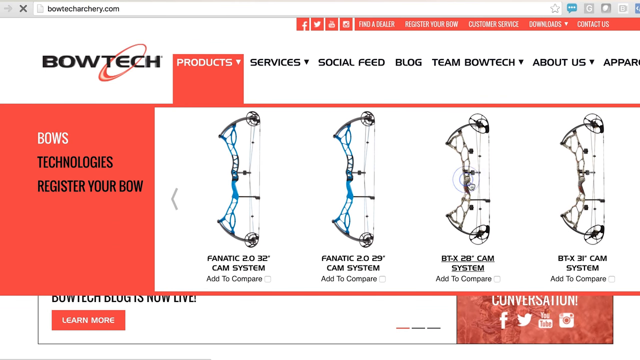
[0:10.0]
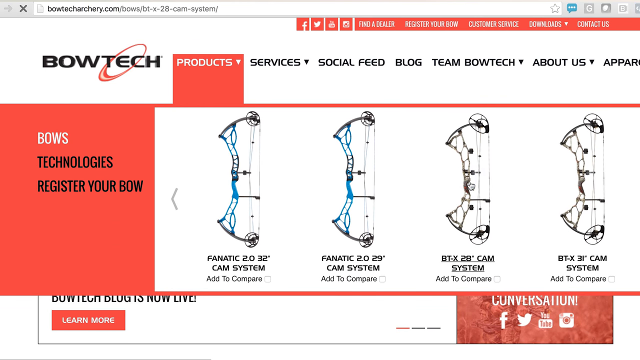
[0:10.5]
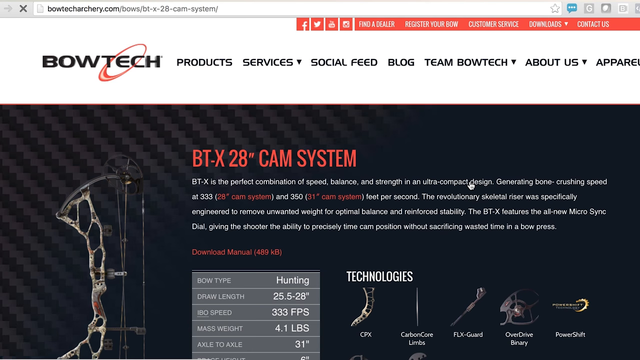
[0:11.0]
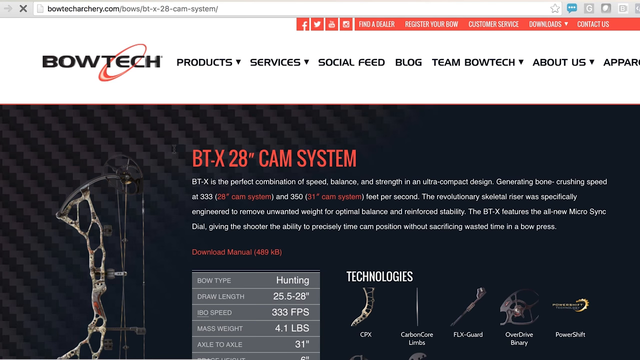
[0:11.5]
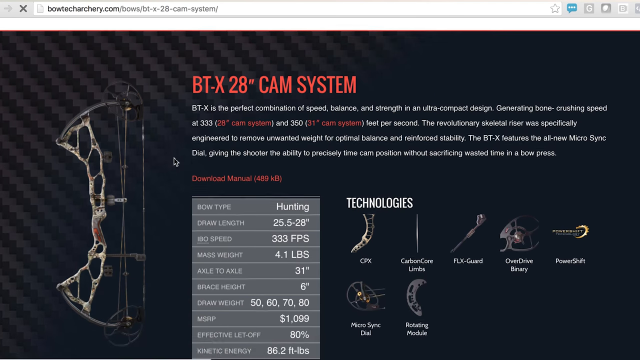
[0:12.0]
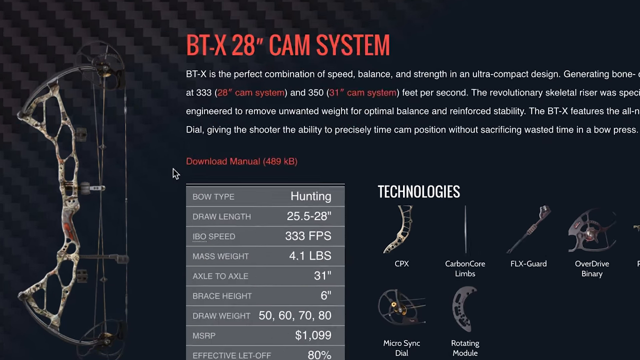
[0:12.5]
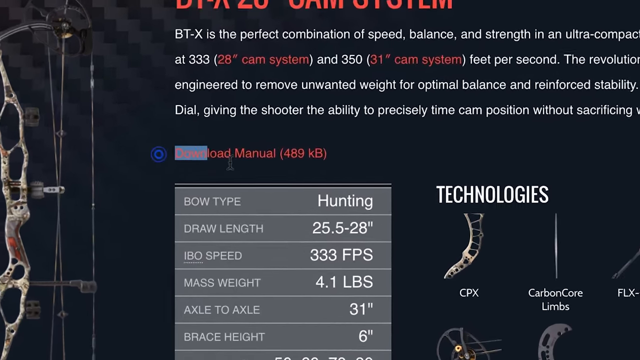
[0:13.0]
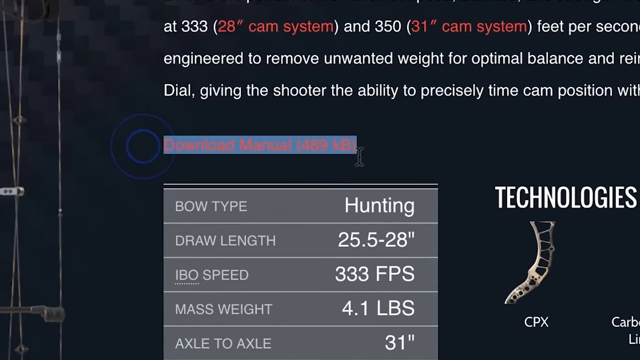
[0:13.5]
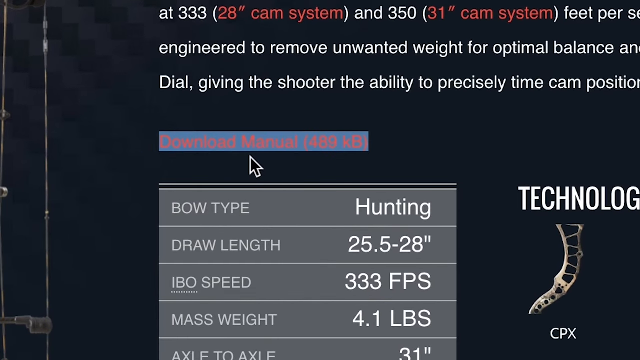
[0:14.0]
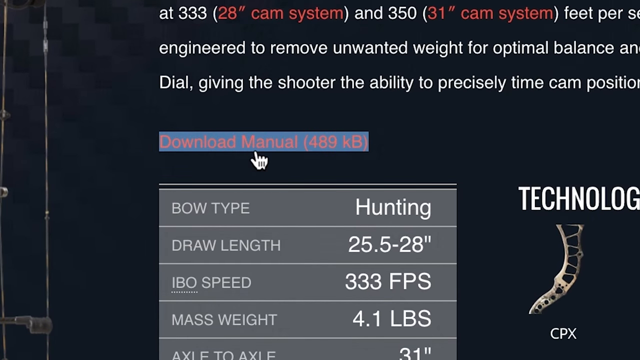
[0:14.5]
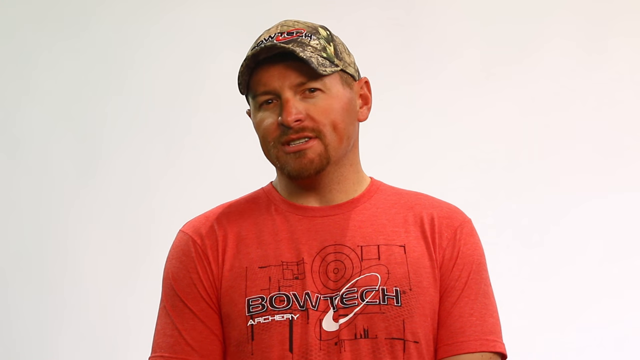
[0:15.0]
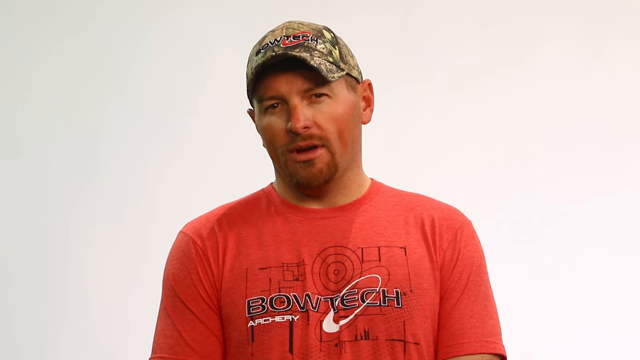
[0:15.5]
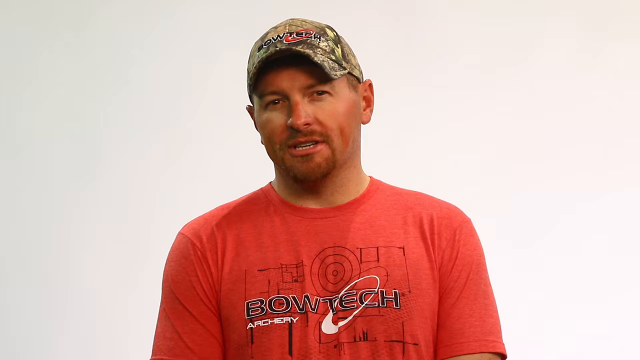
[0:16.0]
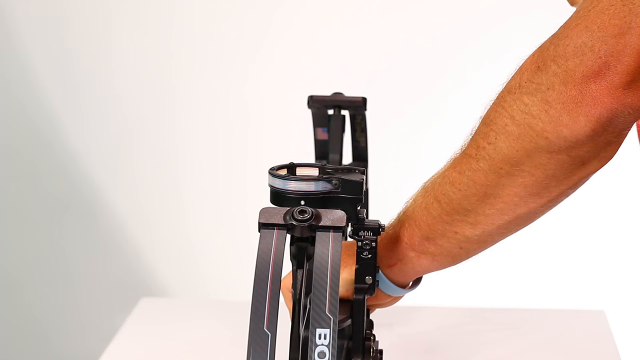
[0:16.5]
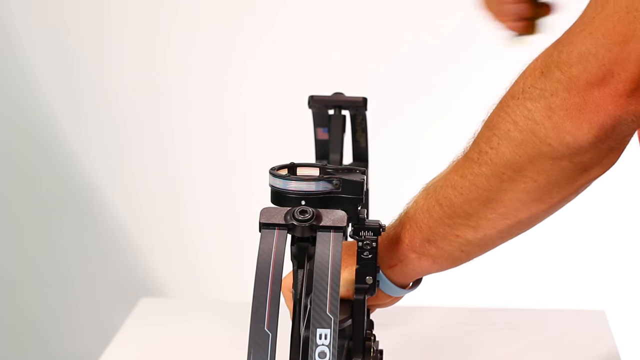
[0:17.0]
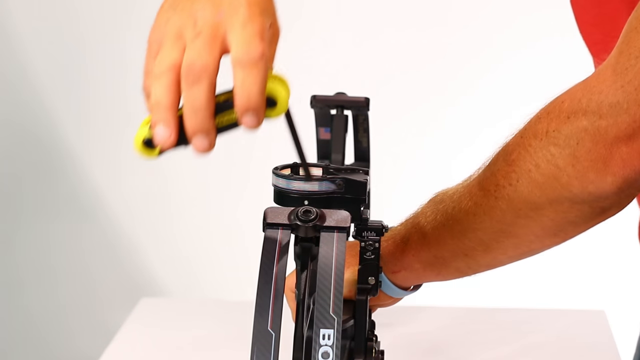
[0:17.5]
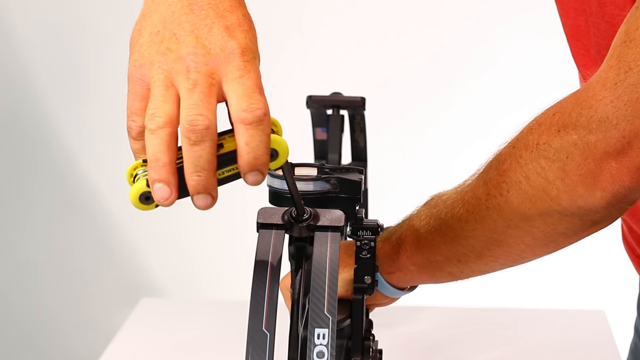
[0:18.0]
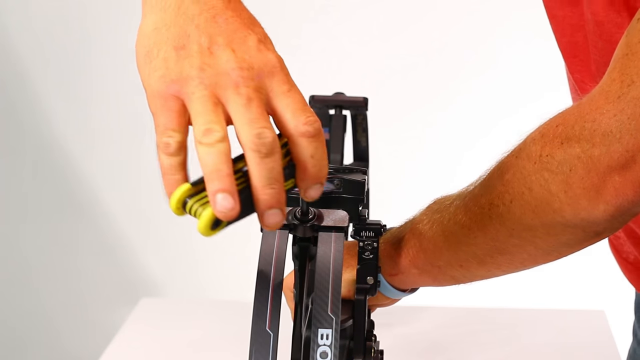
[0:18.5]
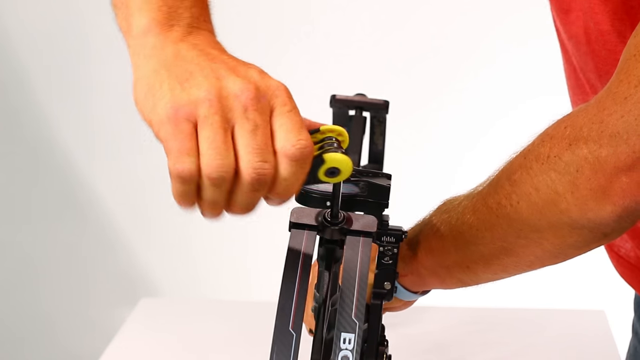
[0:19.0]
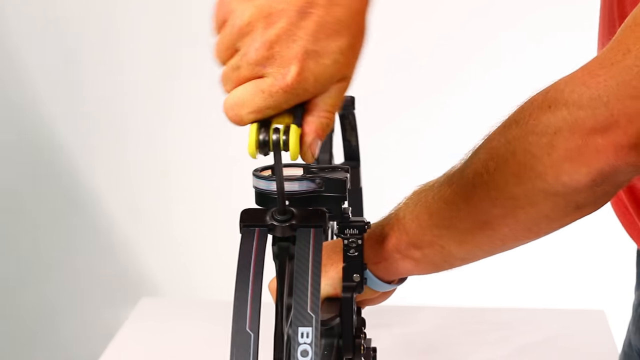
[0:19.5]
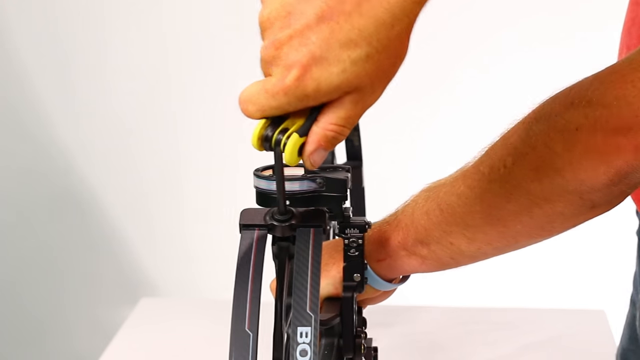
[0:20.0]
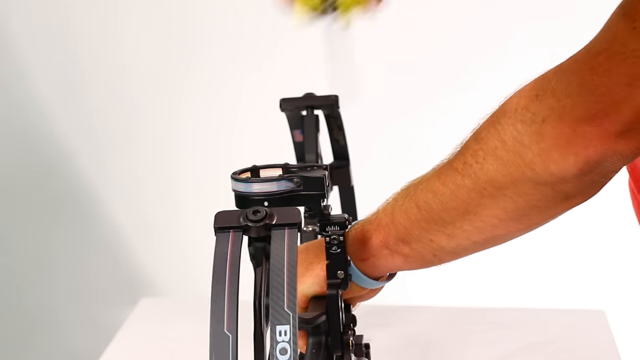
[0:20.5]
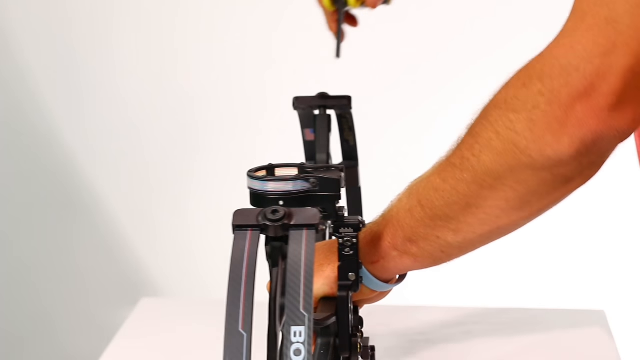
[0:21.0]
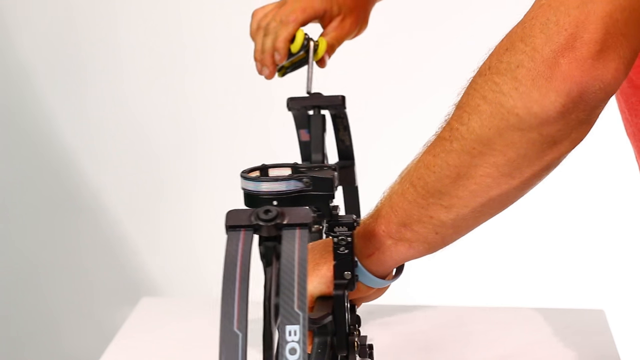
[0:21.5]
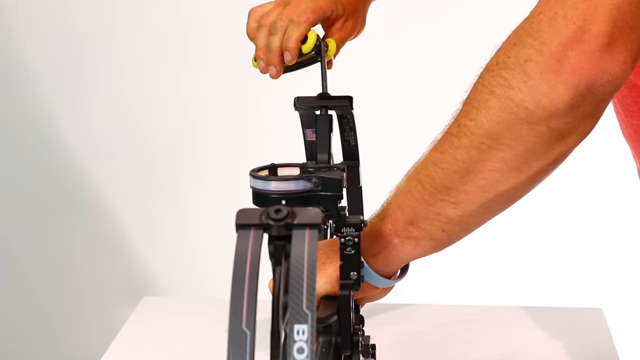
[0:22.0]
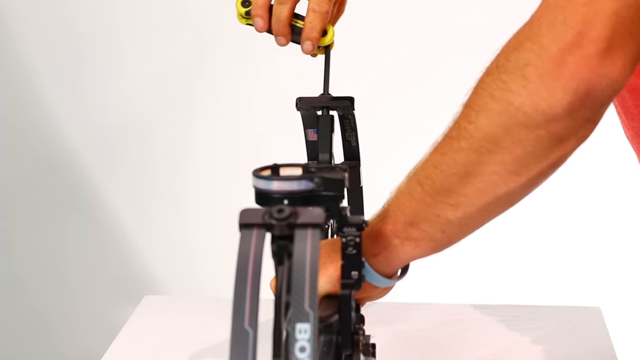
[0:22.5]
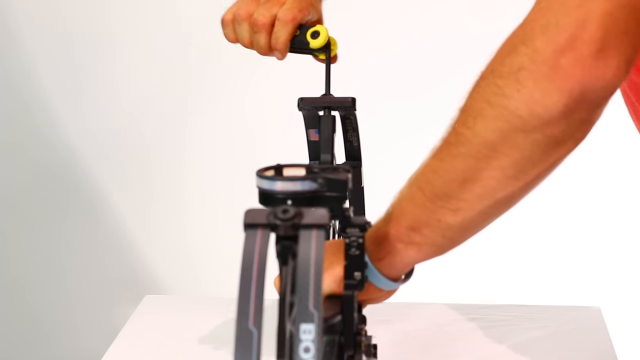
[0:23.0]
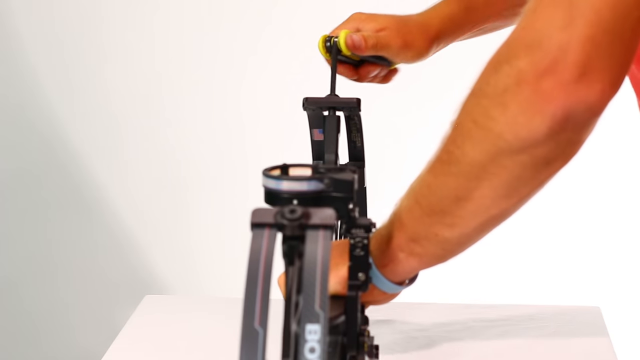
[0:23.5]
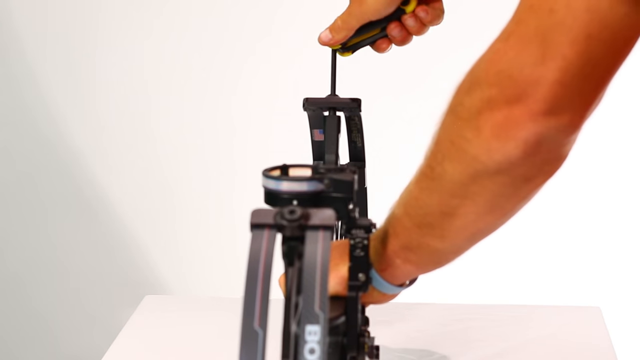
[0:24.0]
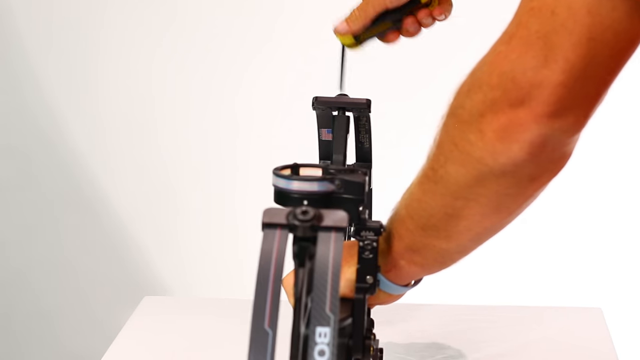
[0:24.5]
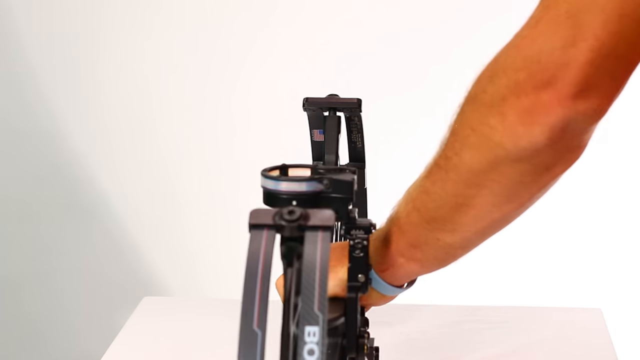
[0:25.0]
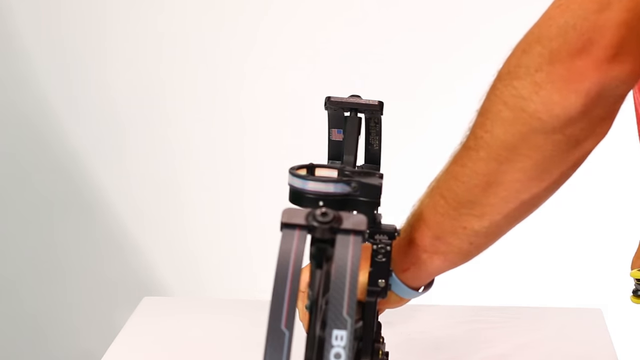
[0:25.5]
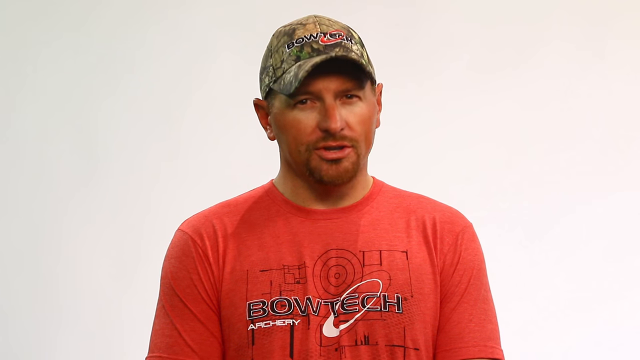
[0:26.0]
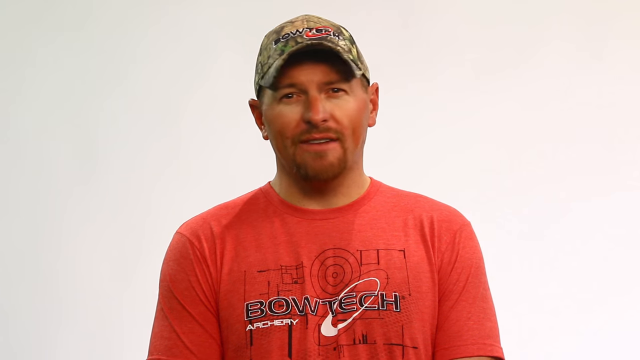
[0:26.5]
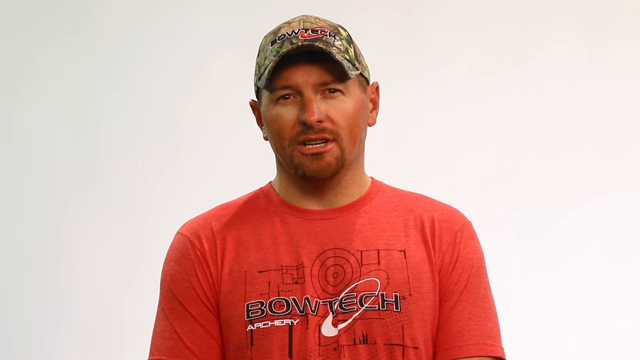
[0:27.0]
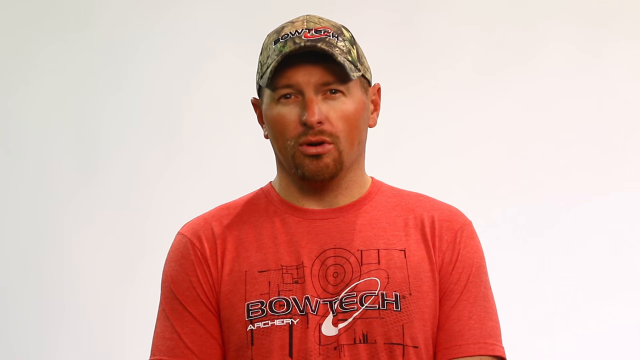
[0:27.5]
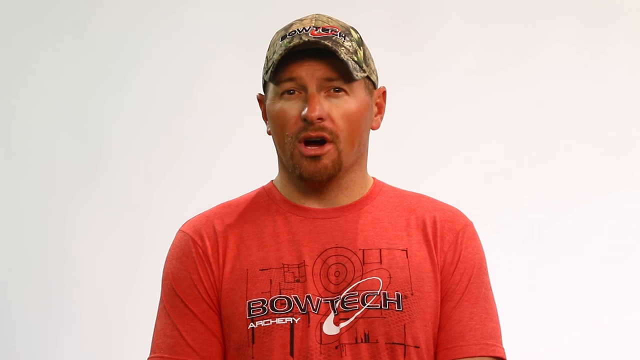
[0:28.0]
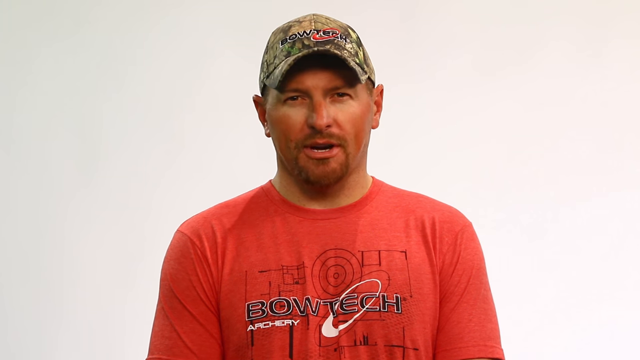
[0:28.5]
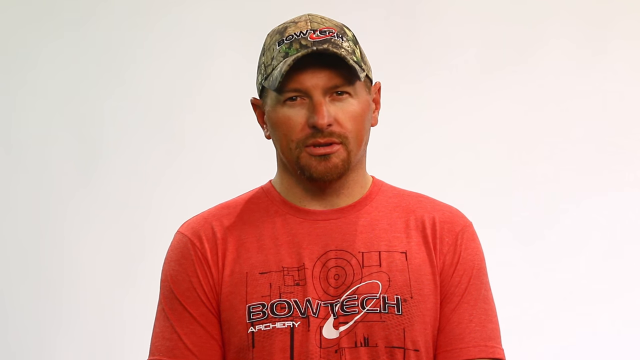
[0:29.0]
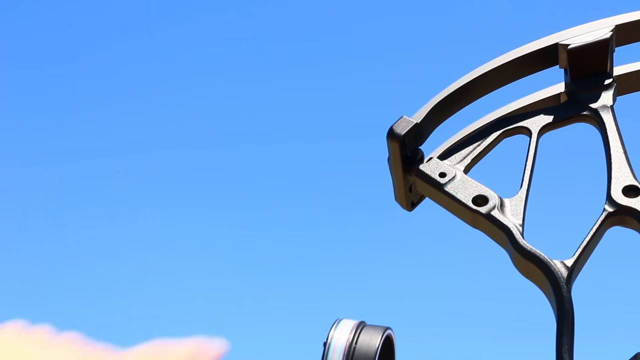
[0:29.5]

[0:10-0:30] A web page, bowtecharchery.com, is shown, with the text "Bowtech" at the top left on a white background. There appear to be several headers at the top reading "product, services, social feed, blog, team Bowtech, about us, and apparel". Product is selected and has a red rectangle around it, and below it there appear to be four bows shown on the right side. A white mouse cursor seems to hover over the third option, which shows a black bow with "btx 28 inch cam system" underneath. The cursor clicks on it, bringing up a new web page with a black background and red text at the top reading "btx-28 inch cam system". A lot of statistics appear as the video scrolls down a bit, then it looks like it zooms in on red text in the middle reading "download manual 489 kilobytes", and the mouse drags from left to right to highlight this text. The video then cuts back to what appears to be a Caucasian man against a white background, wearing a camouflage hat and what looks like a red t-shirt with "Bowtech archery" on the front. He has a little gray stubble beard and mustache like a goatee, and he talks to the camera. Next, what looks like the front of a bow is placed on a table, facing upwards. A left hand coming down from the top right holds the base of the bow, and a right hand comes down from the left middle or top left holding what looks like a yellow multi-tool with a hex wrench. The right hand puts the hex wrench into one of the screws on the front of the bow and turns it clockwise to tighten it, then does the same on the other side of the bow, tightening one on top of the bow. The video goes back to the man, who talks a little more. Then the video moves to what looks like an outdoor scene with a blue sky in the background and the front of the bow on the right side of the frame. A left hand comes up from the left side and points its index finger at the top front of the bow.